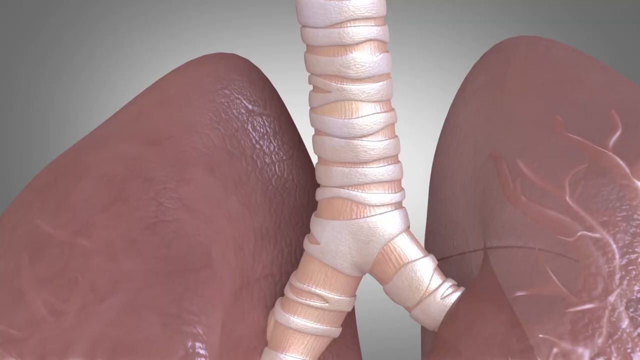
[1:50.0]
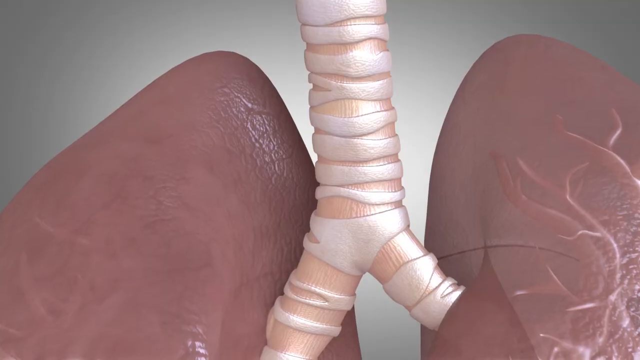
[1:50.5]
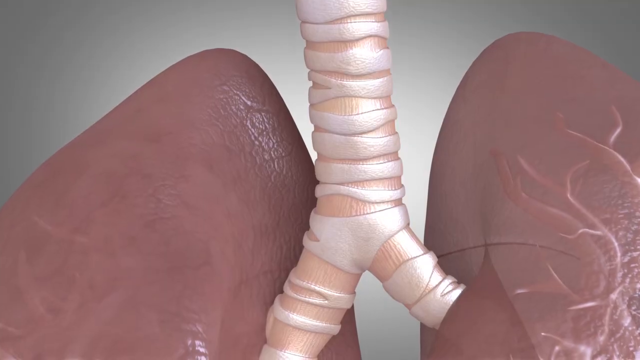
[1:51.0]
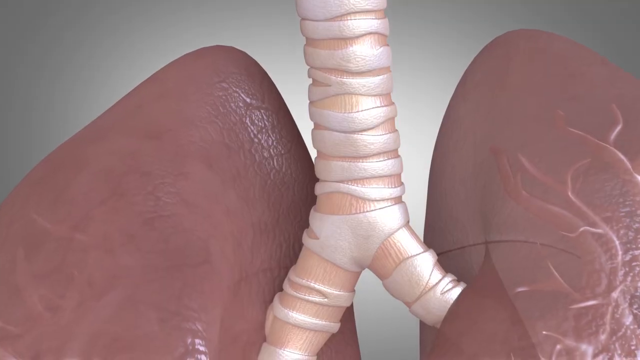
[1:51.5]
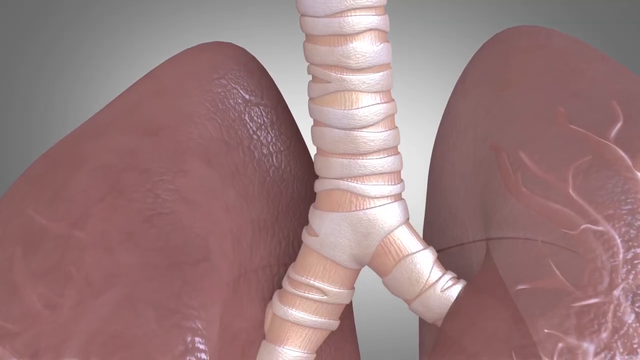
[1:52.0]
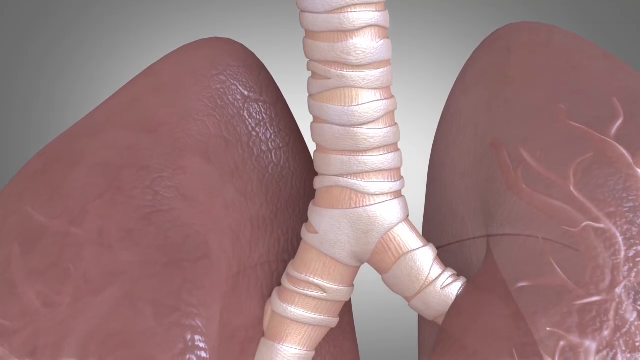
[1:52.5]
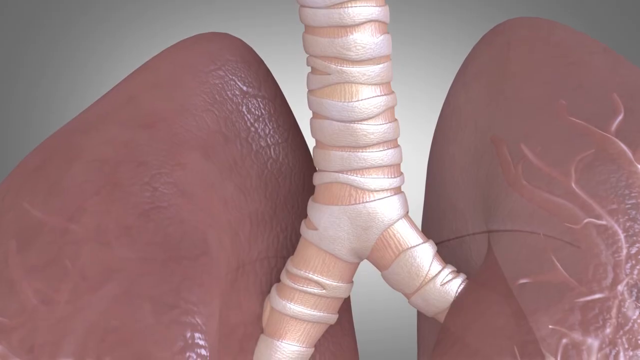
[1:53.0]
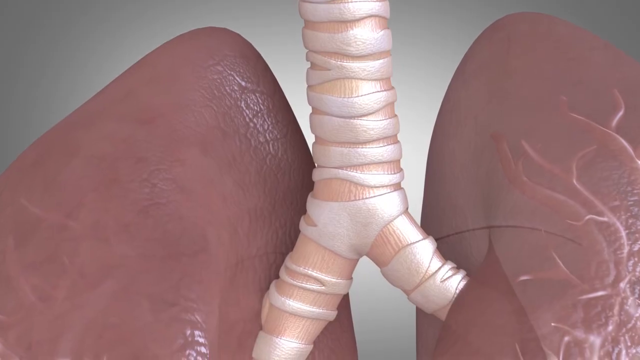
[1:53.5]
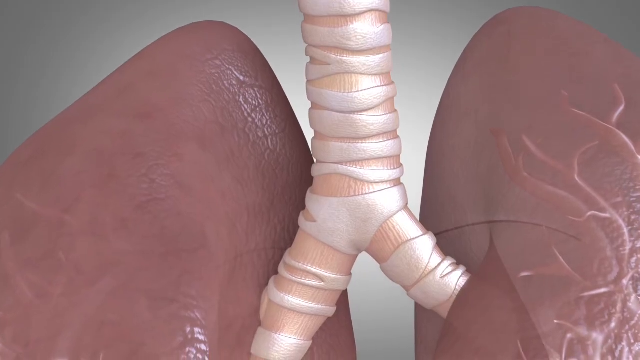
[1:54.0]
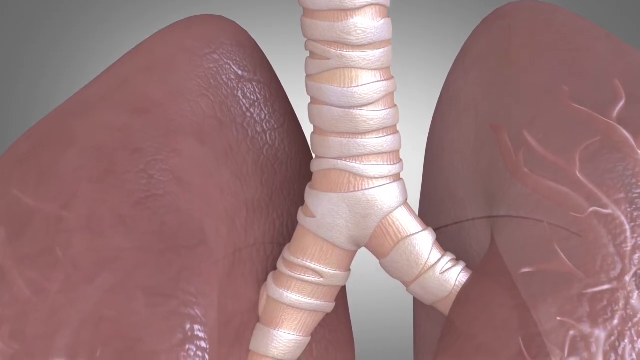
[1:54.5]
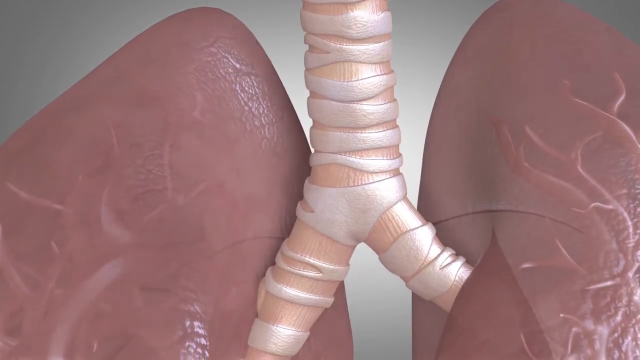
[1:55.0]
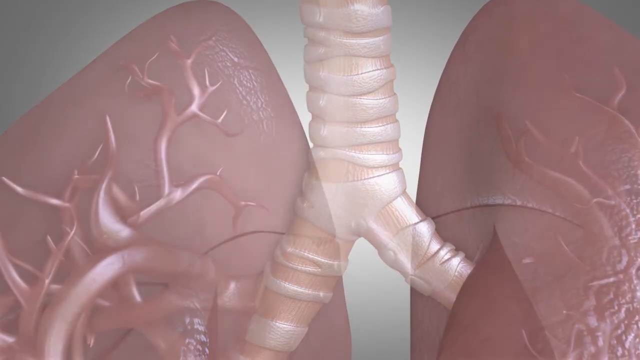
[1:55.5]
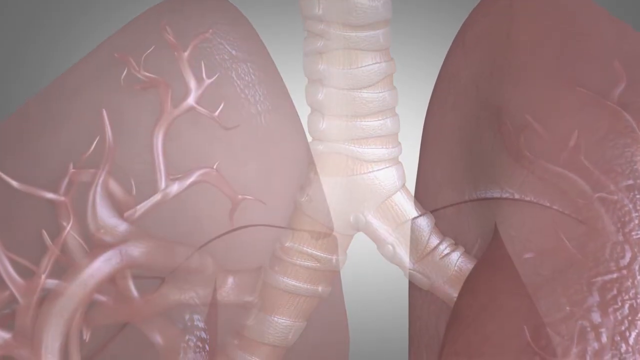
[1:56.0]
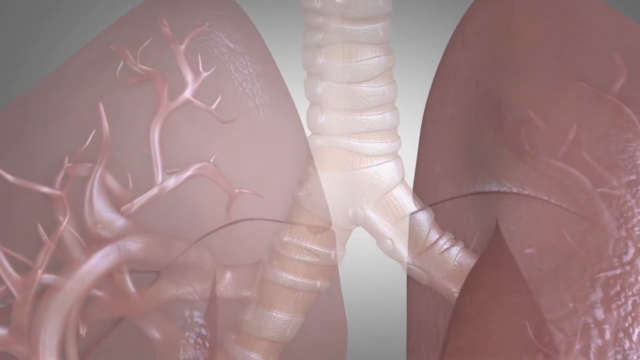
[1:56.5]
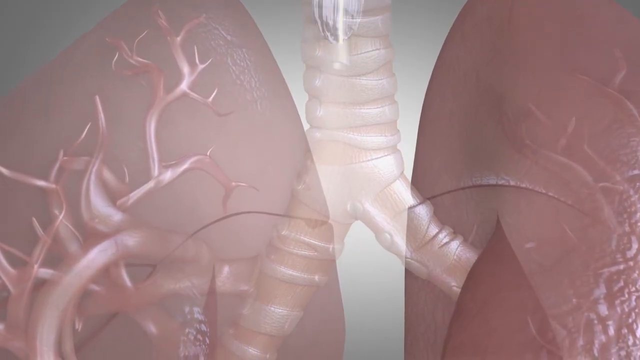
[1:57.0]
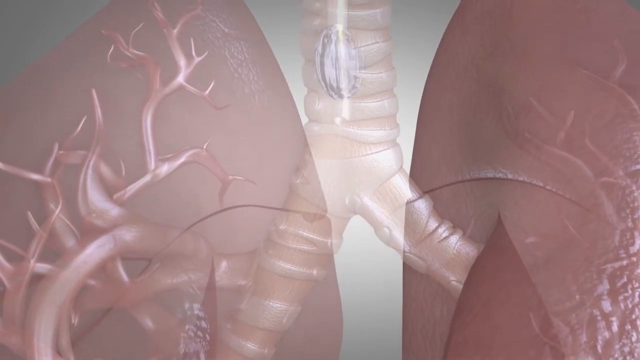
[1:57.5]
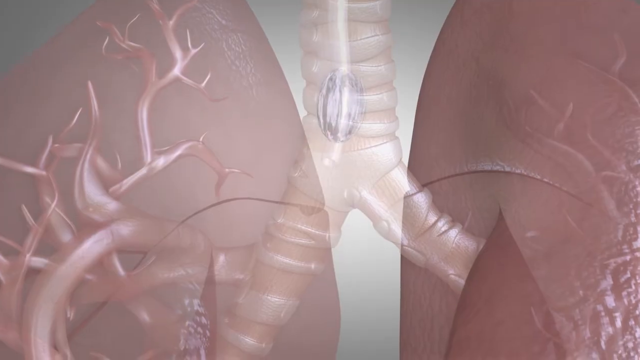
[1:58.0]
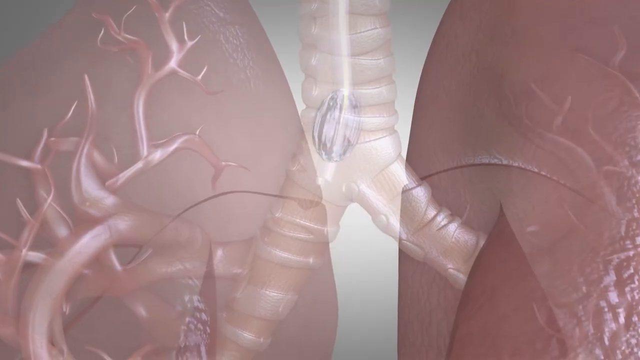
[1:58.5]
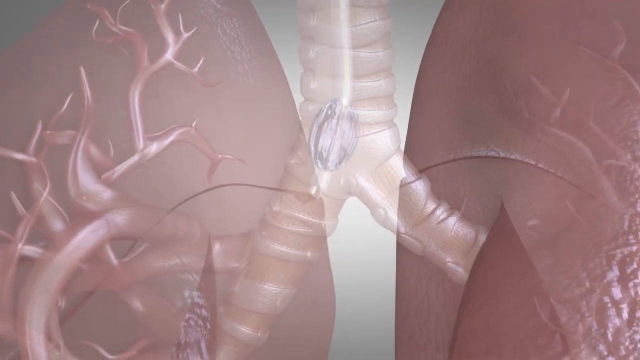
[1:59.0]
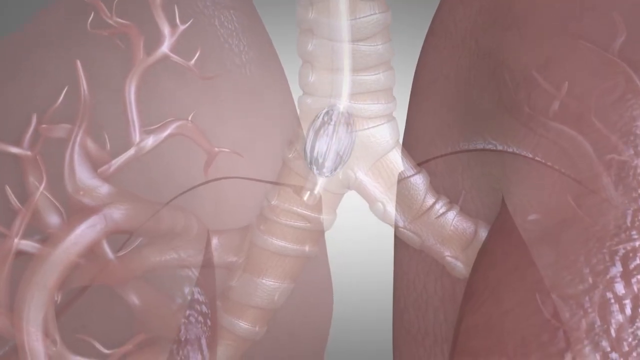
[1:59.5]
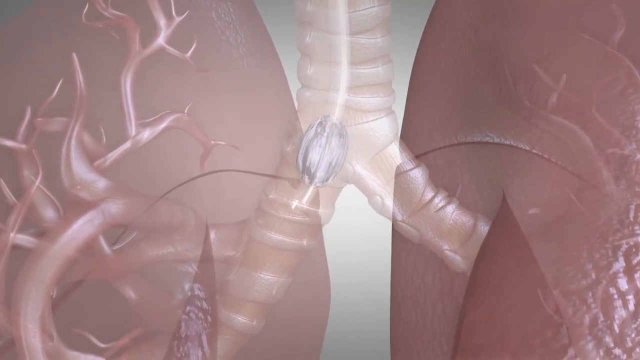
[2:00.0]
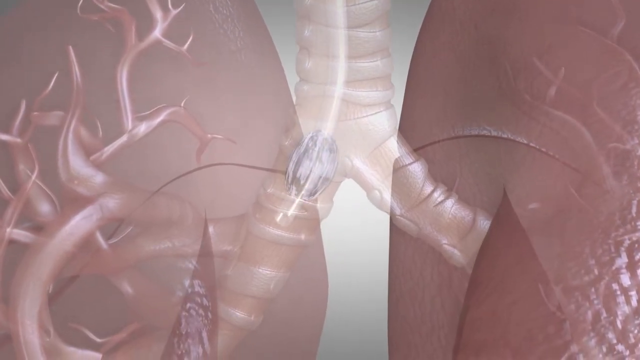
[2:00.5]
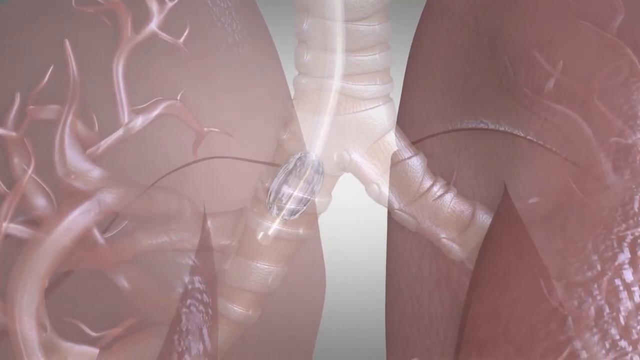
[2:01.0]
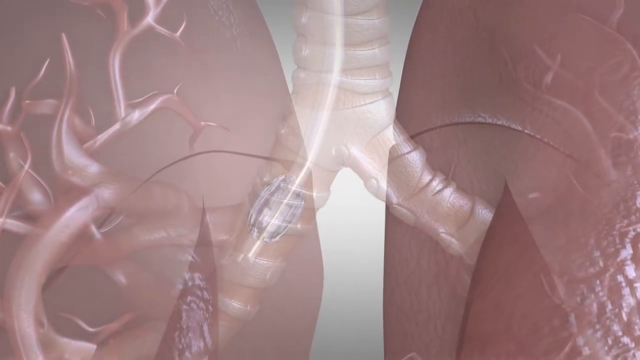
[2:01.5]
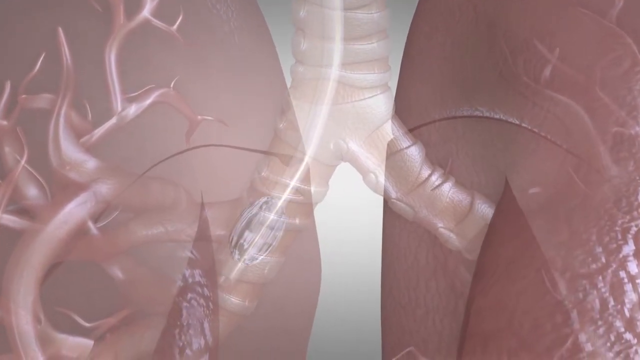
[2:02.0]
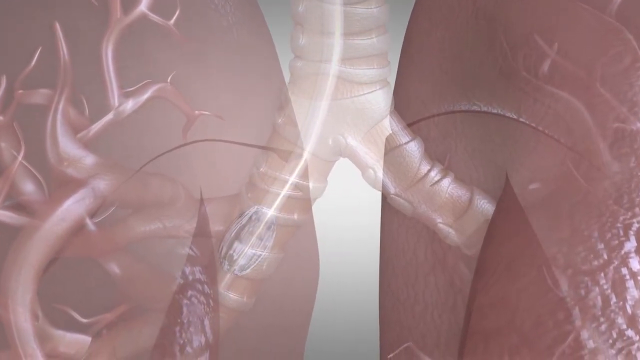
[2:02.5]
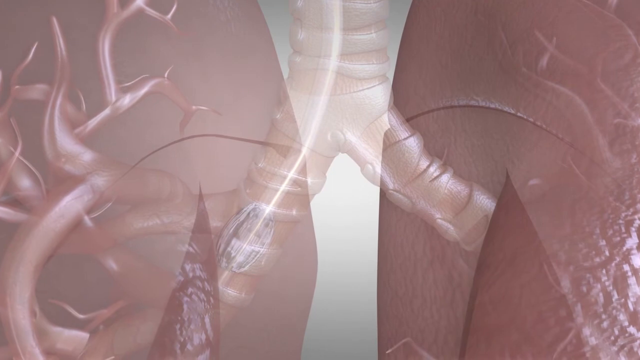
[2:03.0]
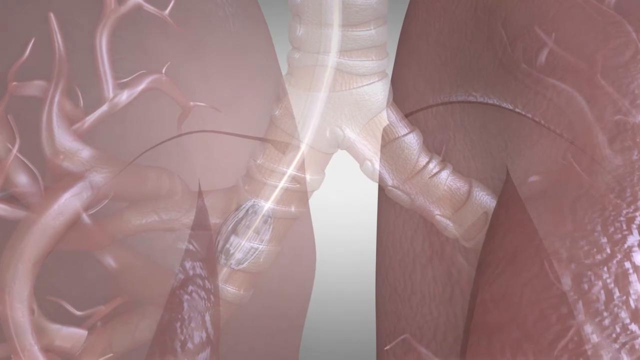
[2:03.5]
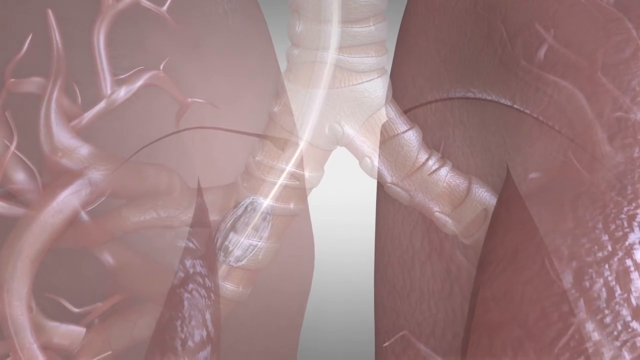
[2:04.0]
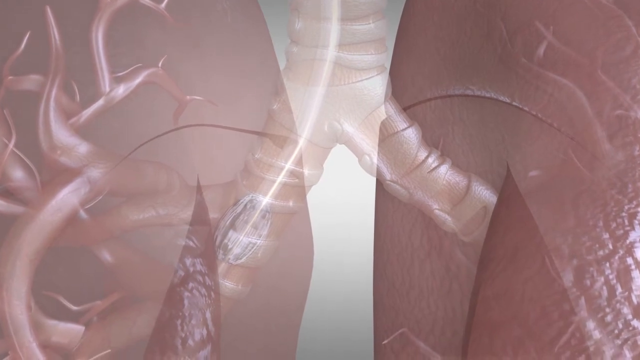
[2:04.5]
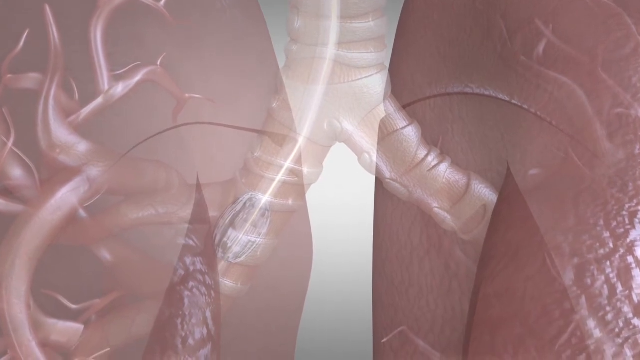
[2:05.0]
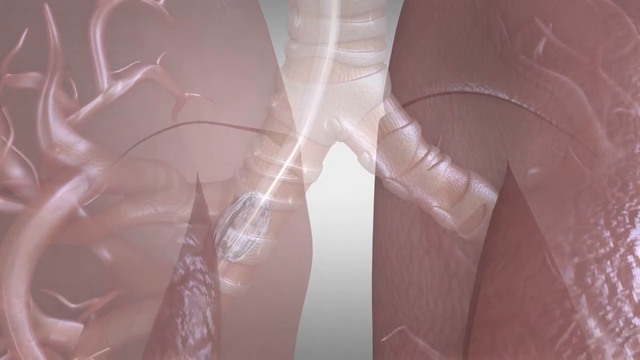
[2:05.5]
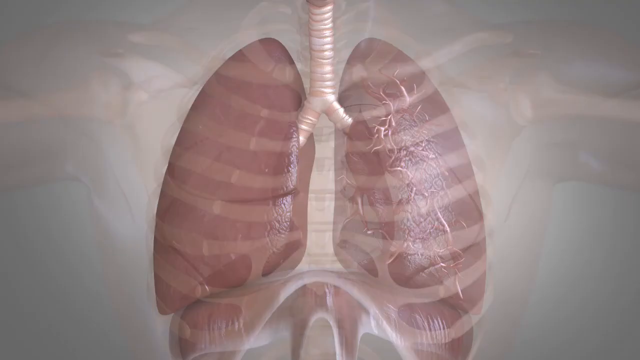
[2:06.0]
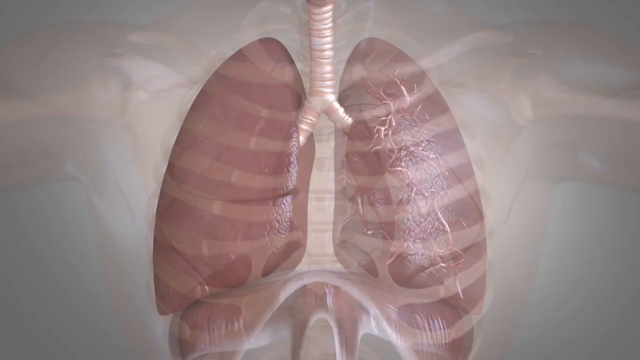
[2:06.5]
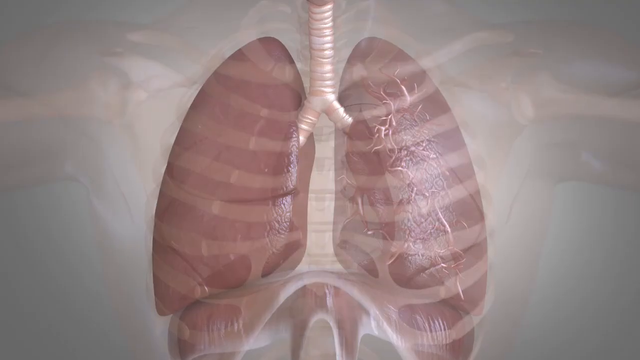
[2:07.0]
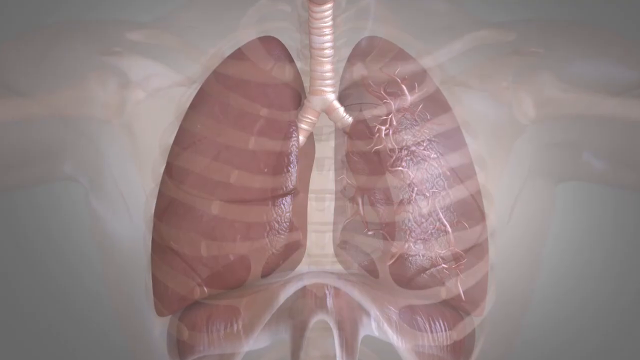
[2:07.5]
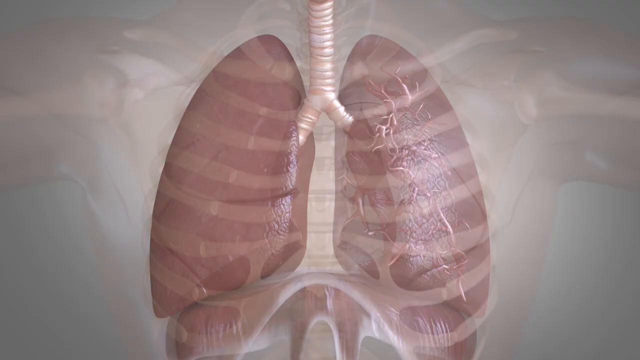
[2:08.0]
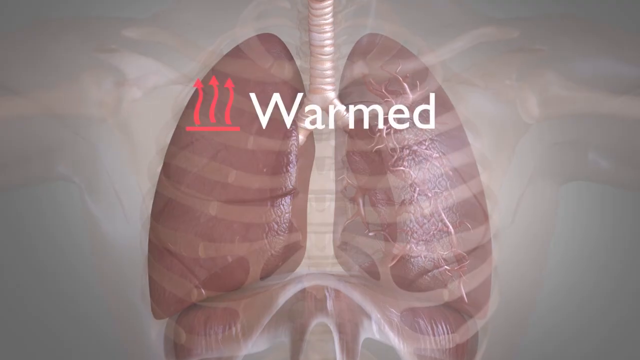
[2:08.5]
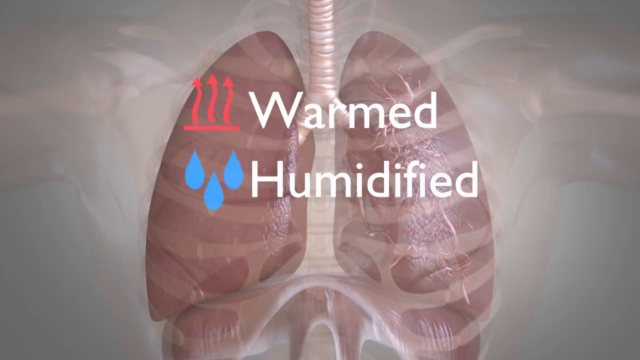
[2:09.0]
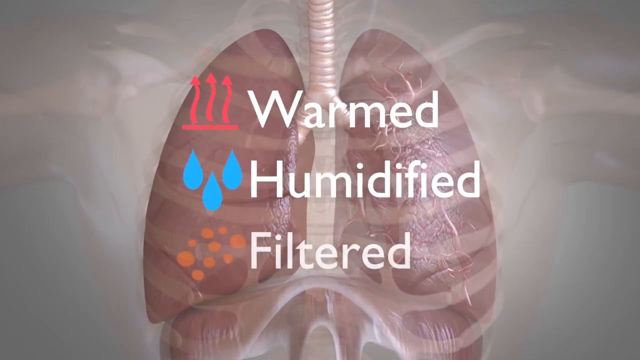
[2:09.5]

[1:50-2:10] A model of the human lungs opens on the very tops of each lung, colored pink. An object moves through the bronchial tube and then turns into the lung on the left. The camera begins to pull away for a full view of the lungs and the white bronchial tubes. The transparent ribcage is visible over the lungs, as are the bones of the arms, which are extended out on either side. The words "Warmed", "Humidified" and "Filtered" appear in the middle of the screen: next to "Warmed" is a graphic of three squiggly red arrows pointing upward, next to "Humidified" a graphic of three blue water drops, and next to "Filtered" a cluster of yellow dots.